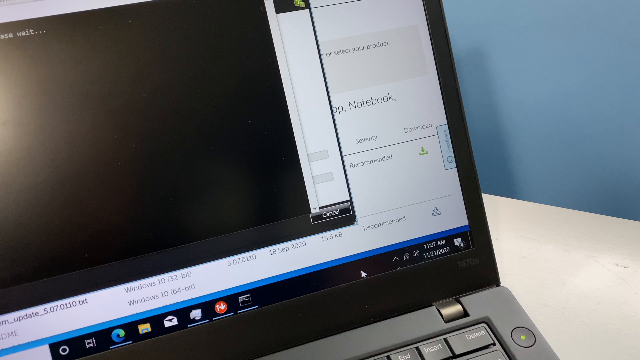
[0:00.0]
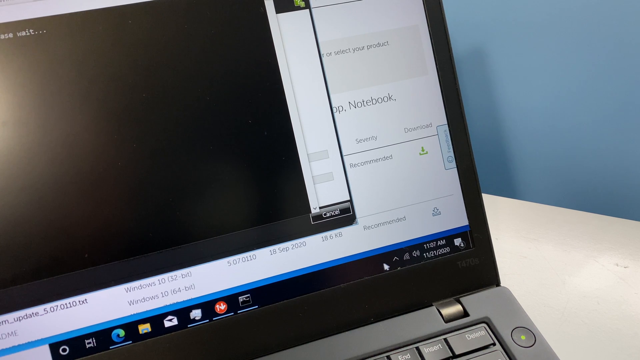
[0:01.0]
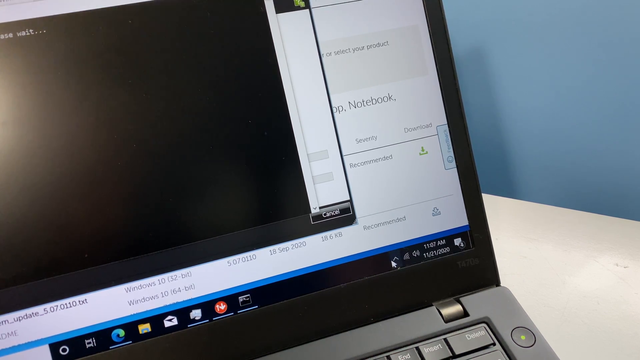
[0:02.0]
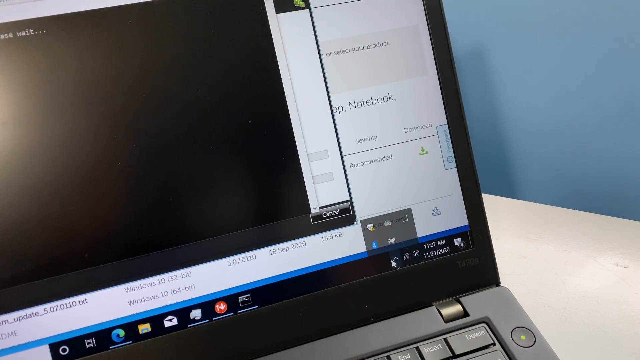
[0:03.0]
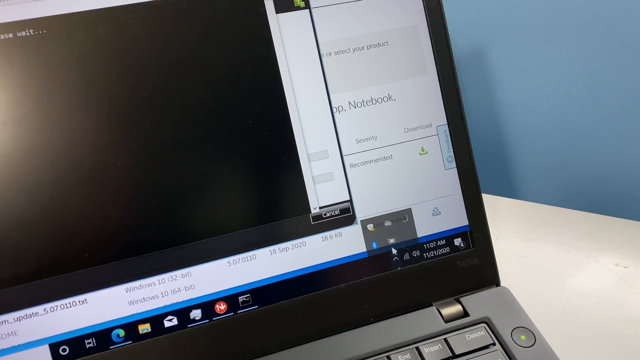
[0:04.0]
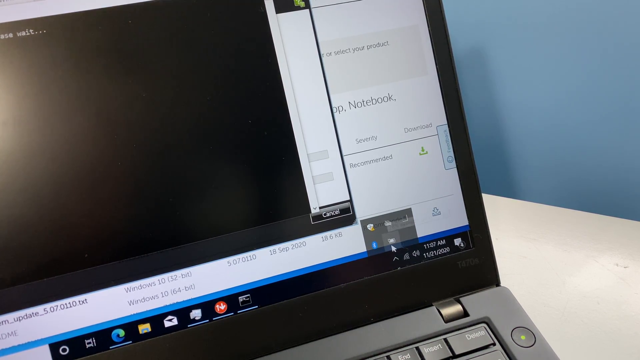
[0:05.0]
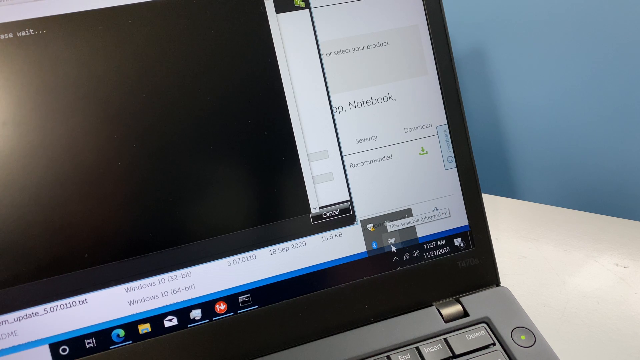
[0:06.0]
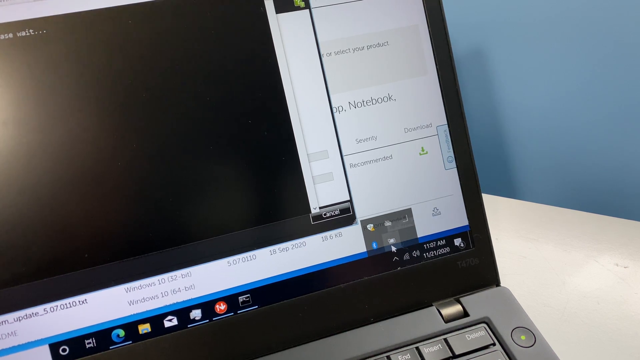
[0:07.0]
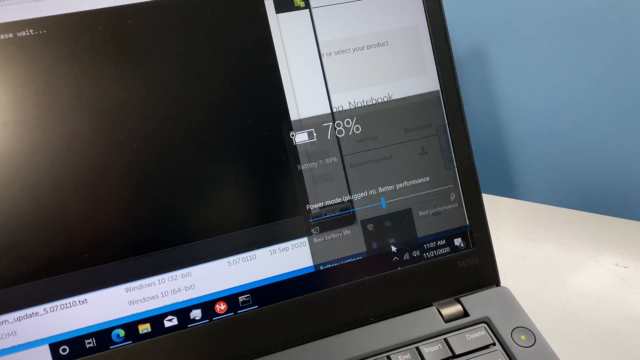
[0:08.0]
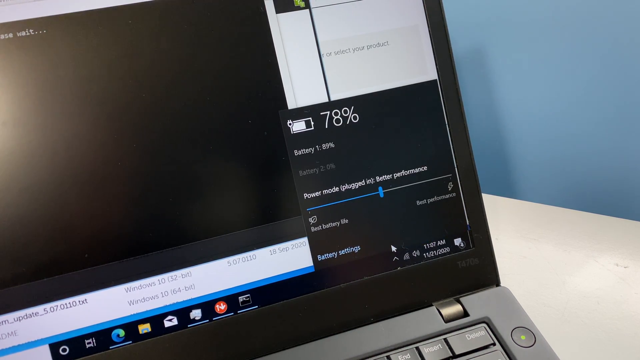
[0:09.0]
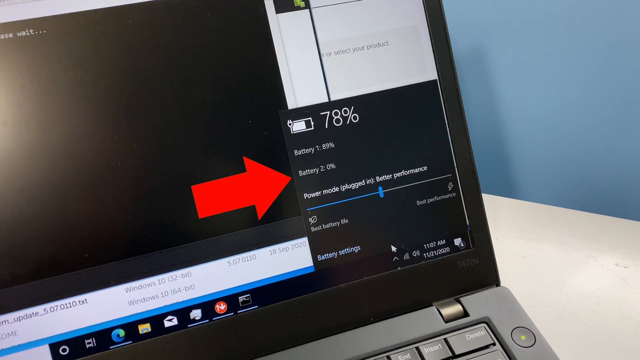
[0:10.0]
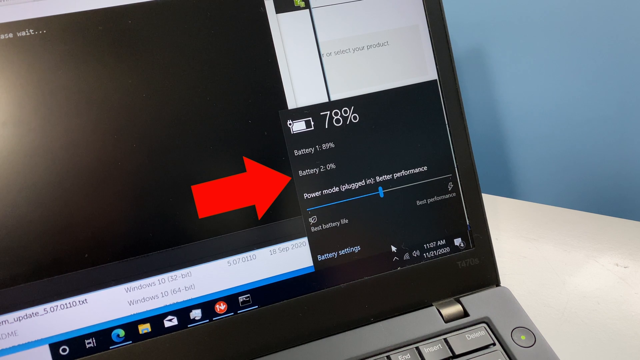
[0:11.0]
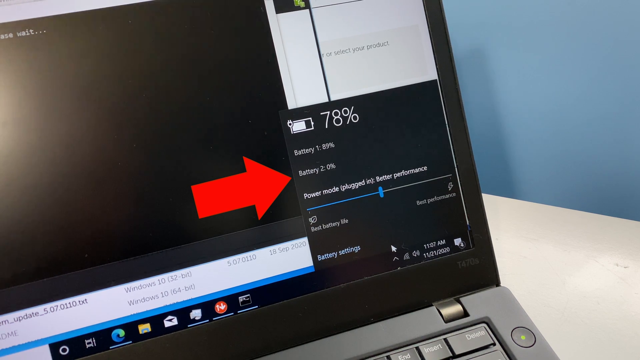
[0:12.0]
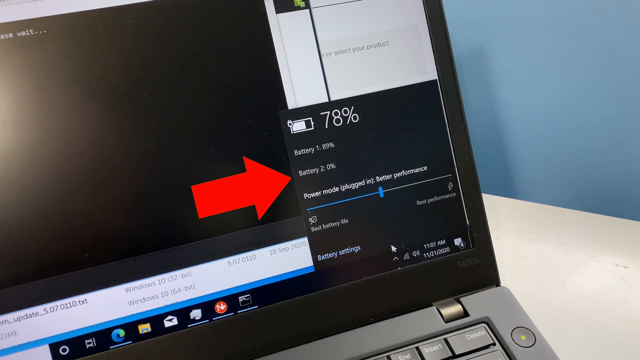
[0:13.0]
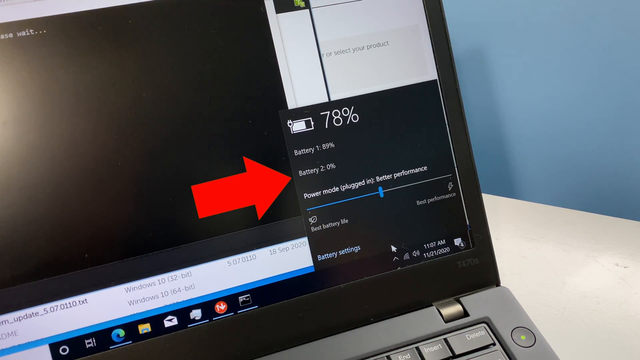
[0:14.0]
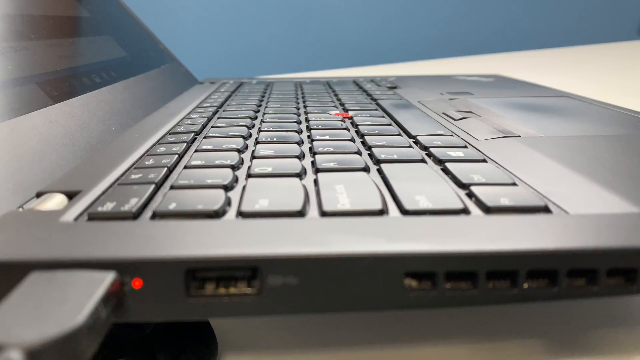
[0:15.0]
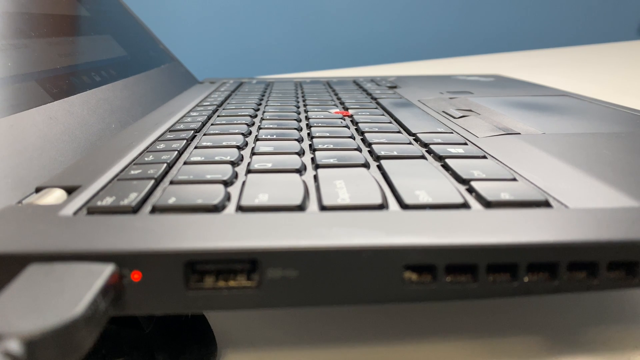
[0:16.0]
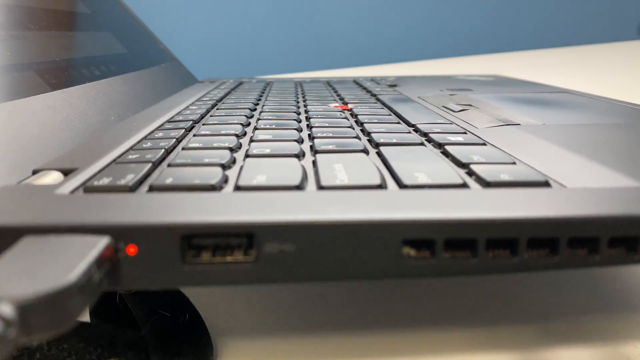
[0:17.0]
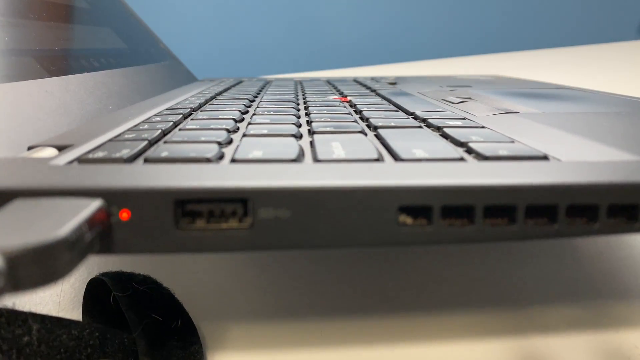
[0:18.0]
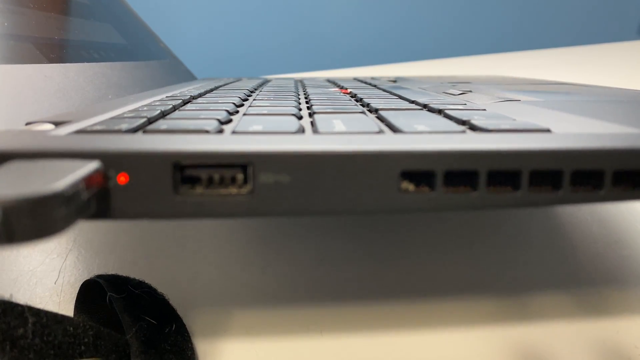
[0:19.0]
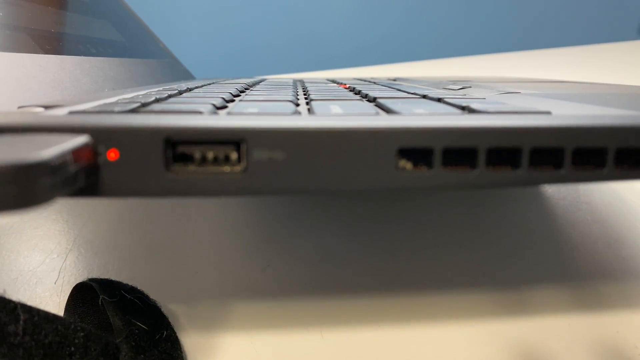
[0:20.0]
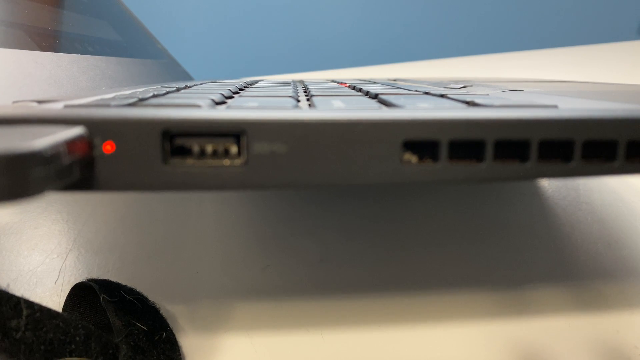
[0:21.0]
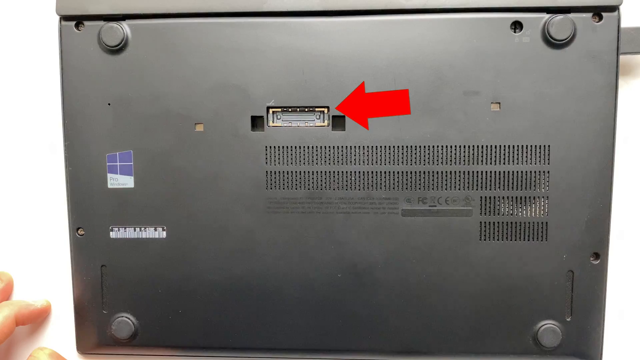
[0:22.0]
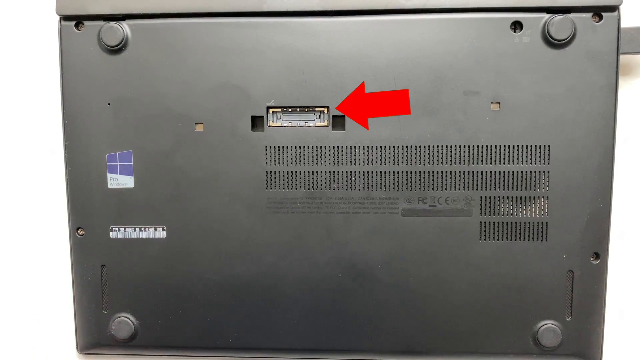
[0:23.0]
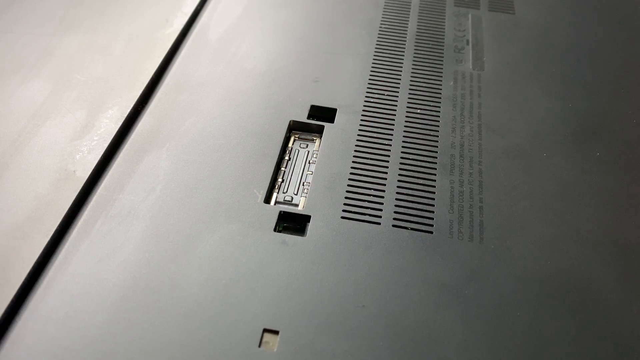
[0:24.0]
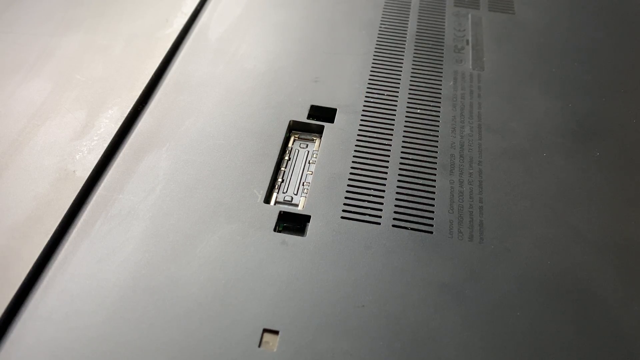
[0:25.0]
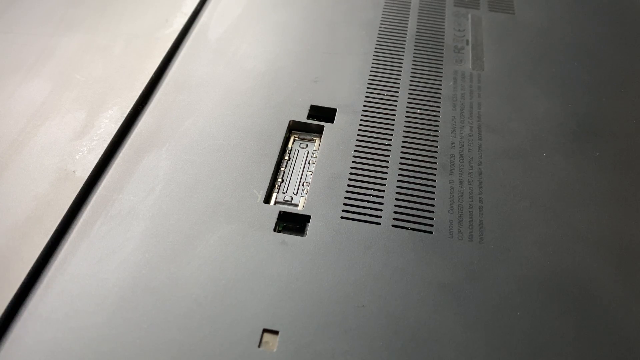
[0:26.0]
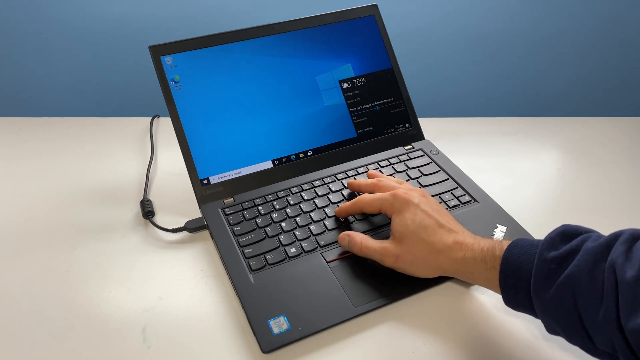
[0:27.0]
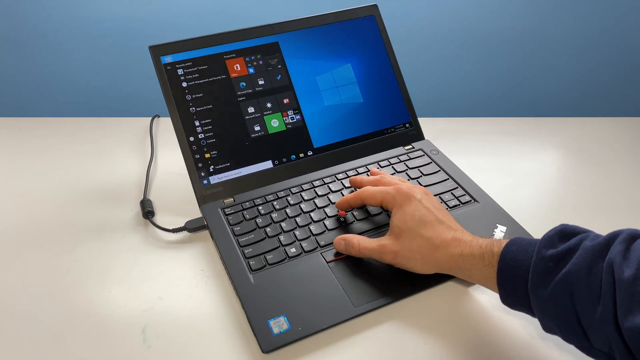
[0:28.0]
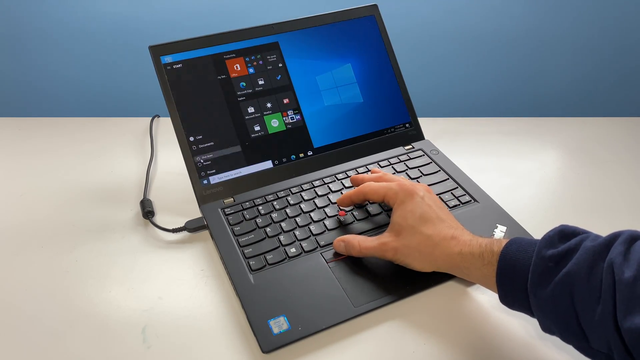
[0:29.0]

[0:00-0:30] Someone appears to be making some kind of instructional video about doing something on a Windows laptop. First the view goes to the battery icon in the bottom right corner, and the mouse seems to circle around or under something like "battery 2". After that it is hard to tell what is happening, but a couple of plugs appear, such as the USB on the side, and something on the very bottom of the computer. What looks like a man's hand, and at one point both hands, is visible, possibly with a dress shirt. There is just one man and one computer, and the setting is a single room with the Windows laptop. A terminal might also be open on the laptop.